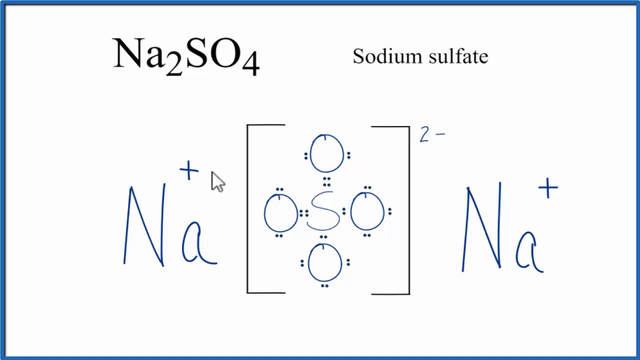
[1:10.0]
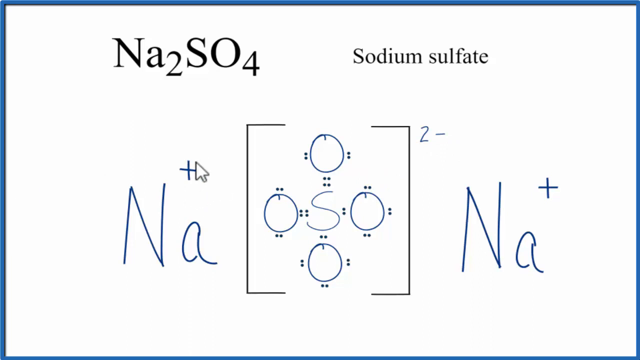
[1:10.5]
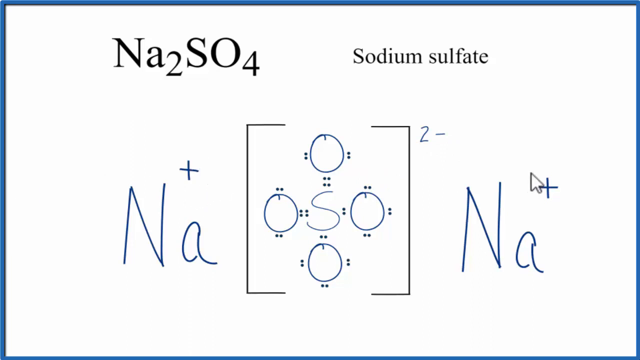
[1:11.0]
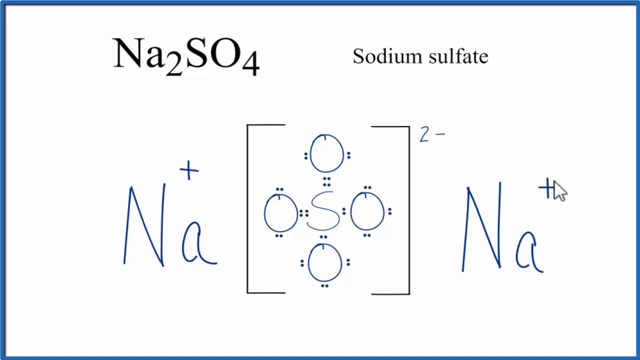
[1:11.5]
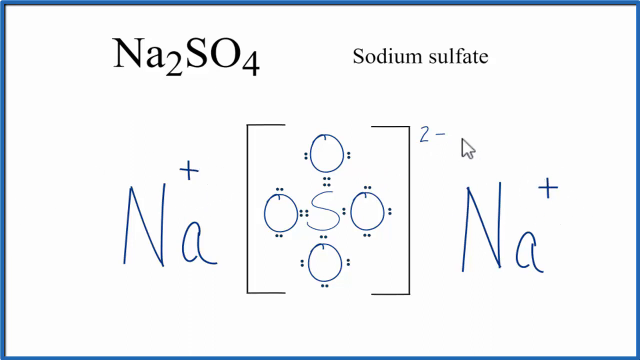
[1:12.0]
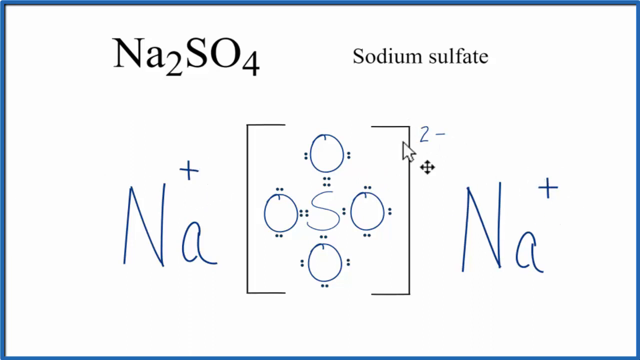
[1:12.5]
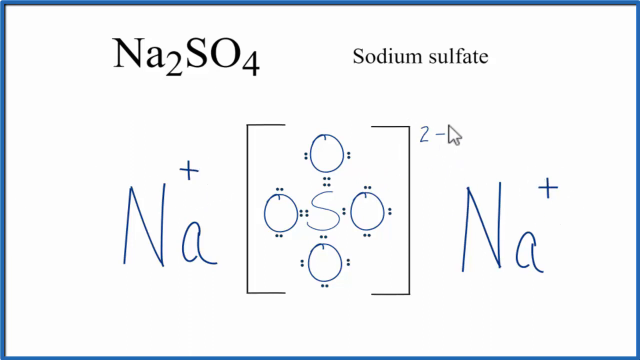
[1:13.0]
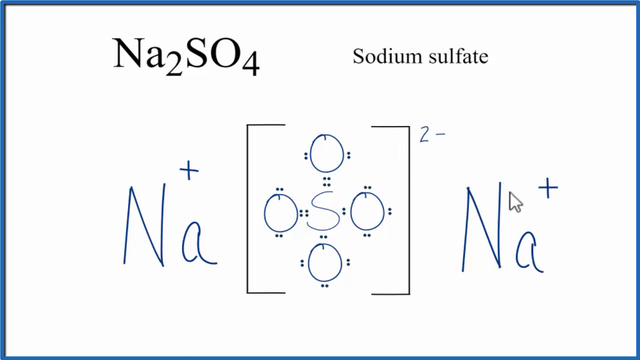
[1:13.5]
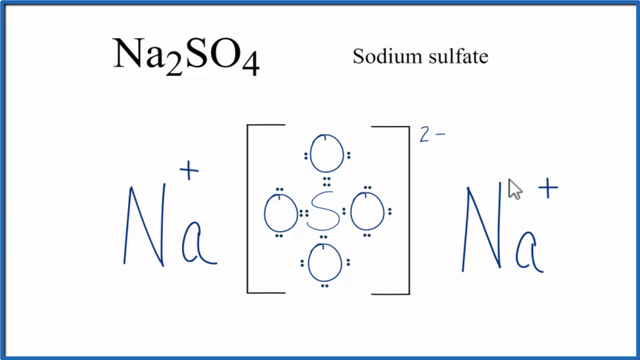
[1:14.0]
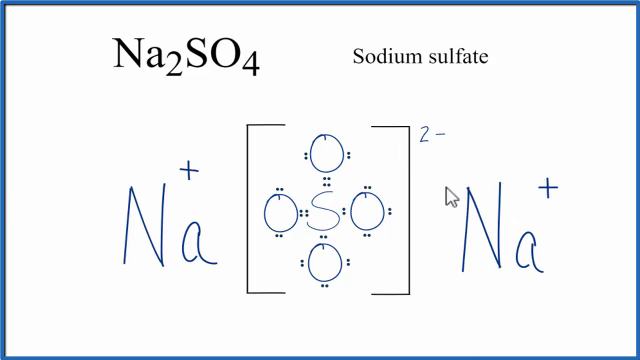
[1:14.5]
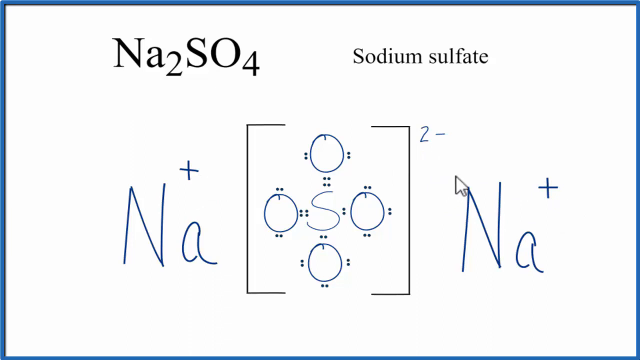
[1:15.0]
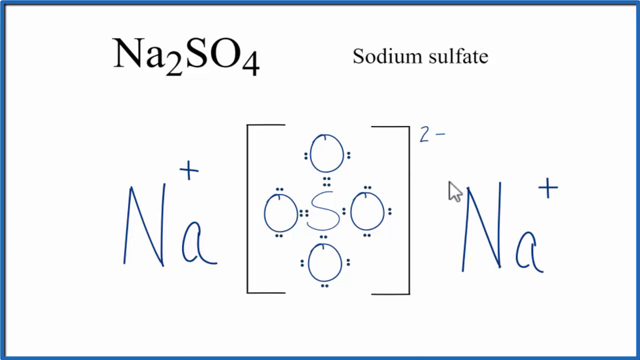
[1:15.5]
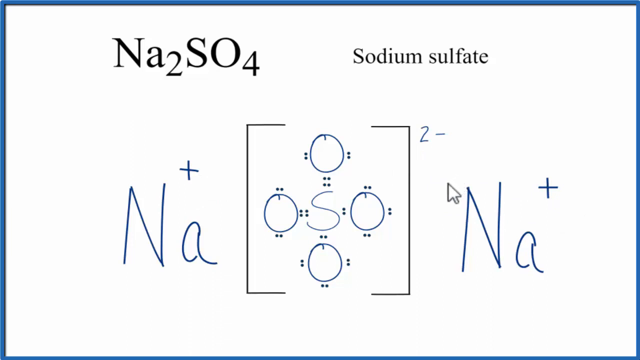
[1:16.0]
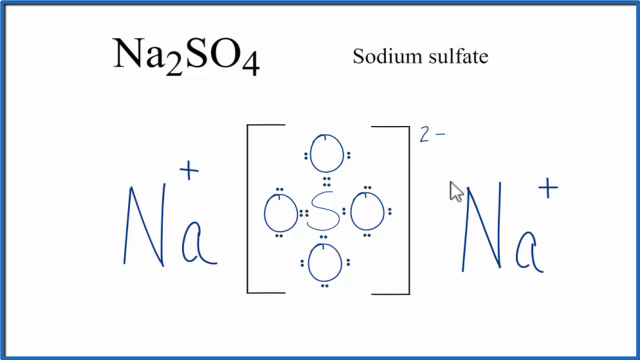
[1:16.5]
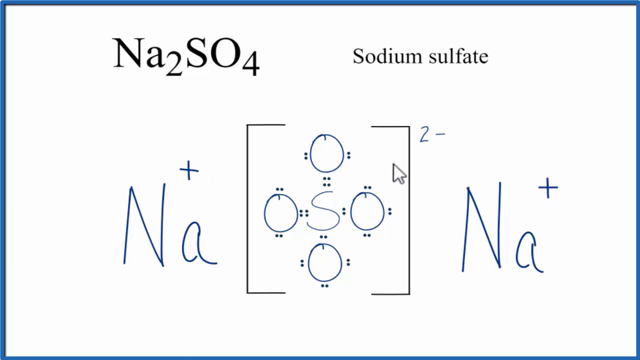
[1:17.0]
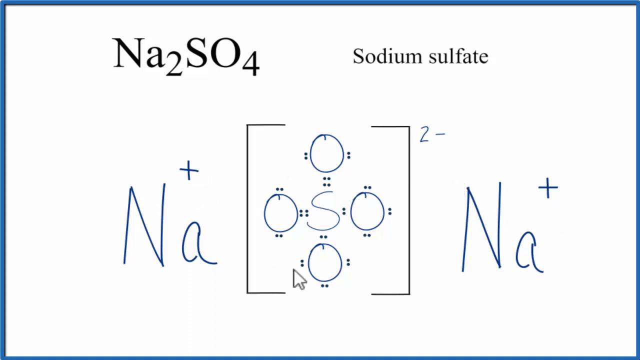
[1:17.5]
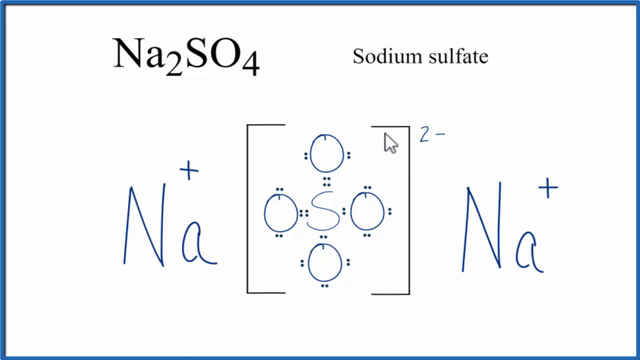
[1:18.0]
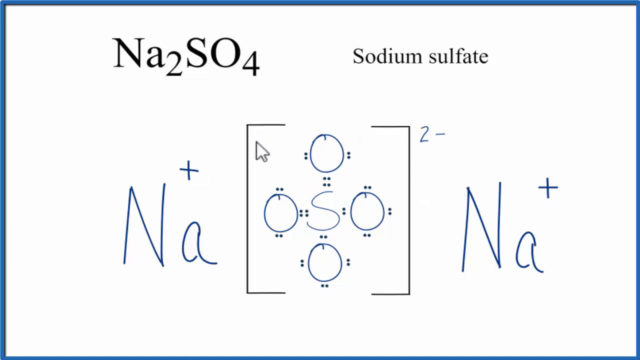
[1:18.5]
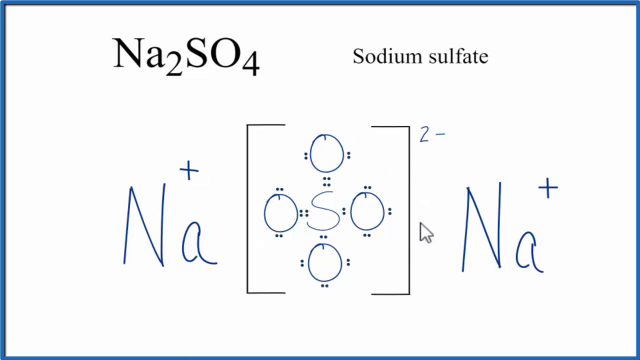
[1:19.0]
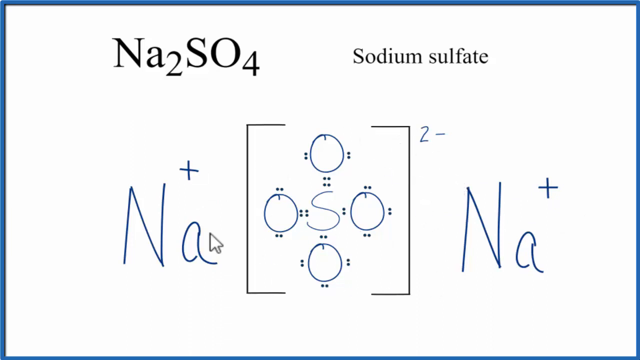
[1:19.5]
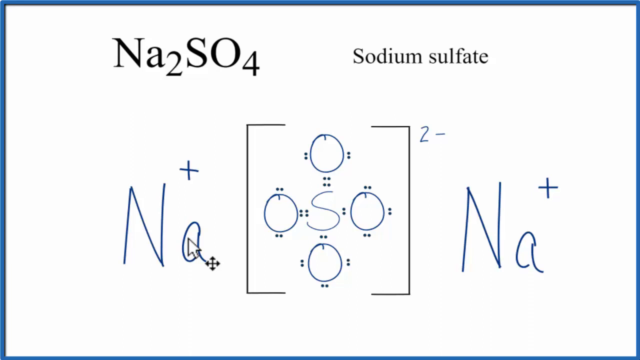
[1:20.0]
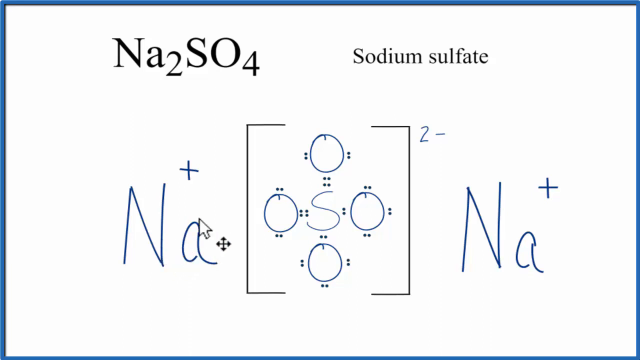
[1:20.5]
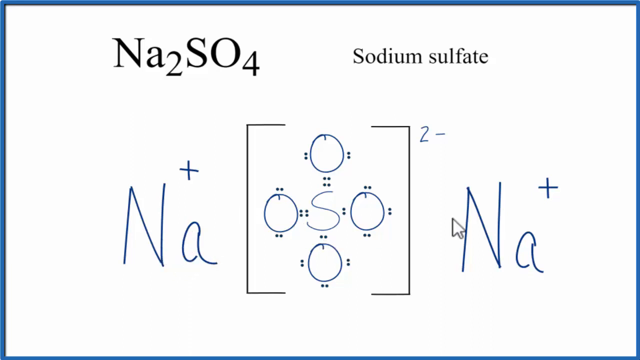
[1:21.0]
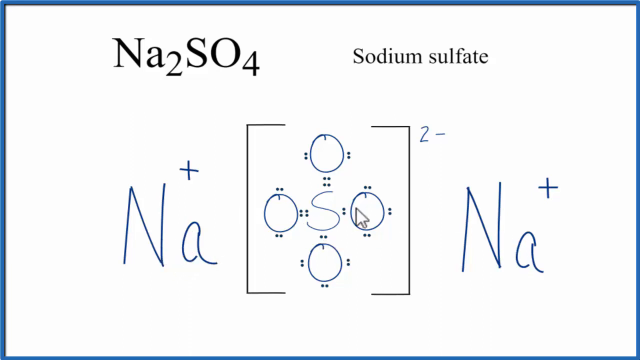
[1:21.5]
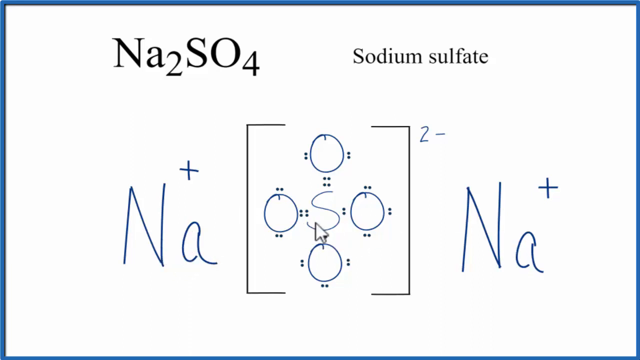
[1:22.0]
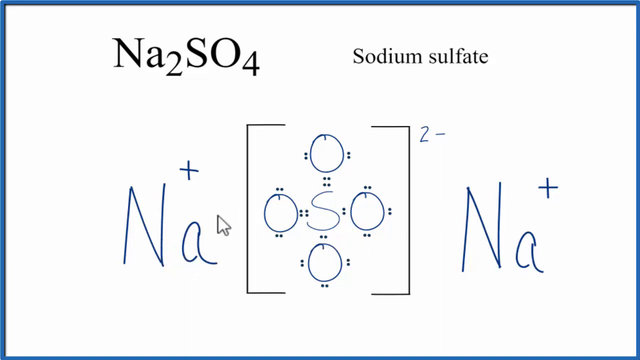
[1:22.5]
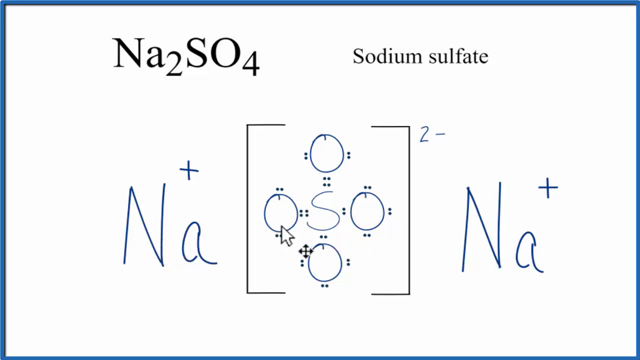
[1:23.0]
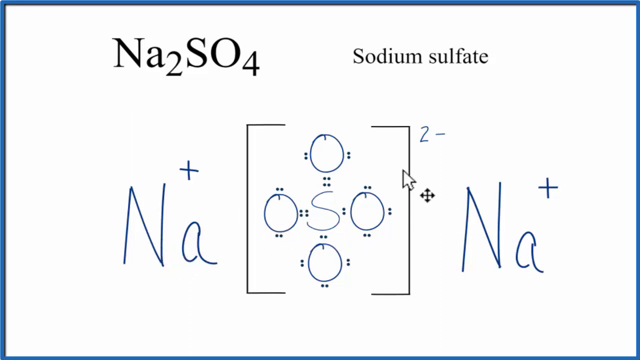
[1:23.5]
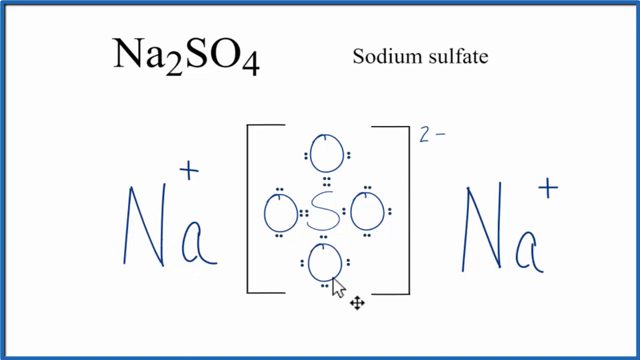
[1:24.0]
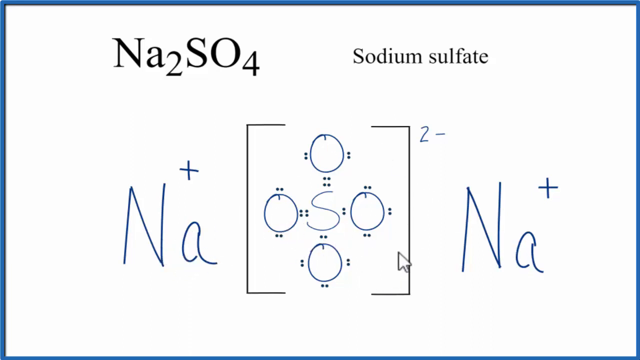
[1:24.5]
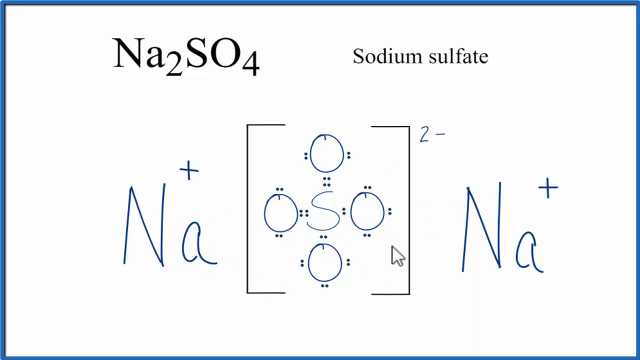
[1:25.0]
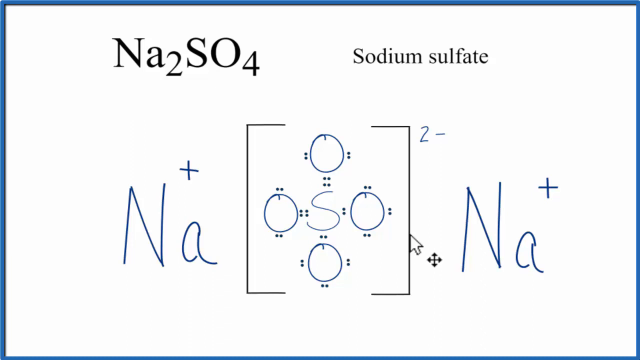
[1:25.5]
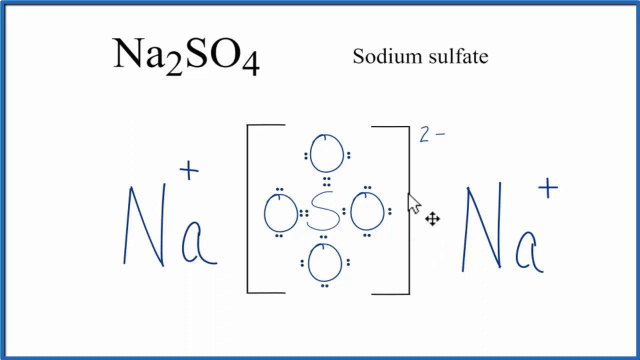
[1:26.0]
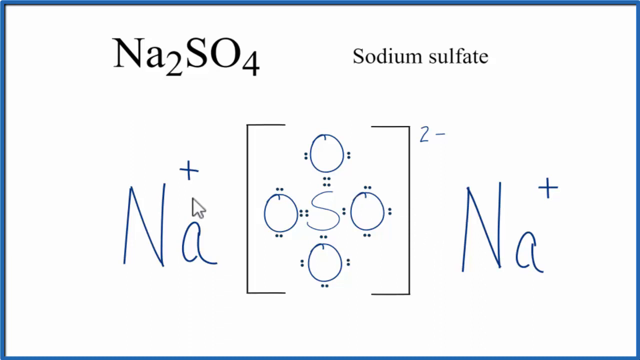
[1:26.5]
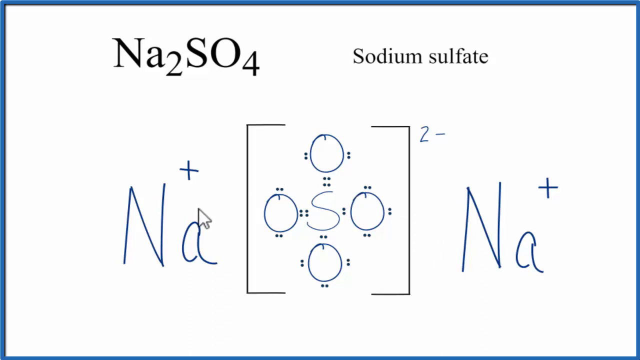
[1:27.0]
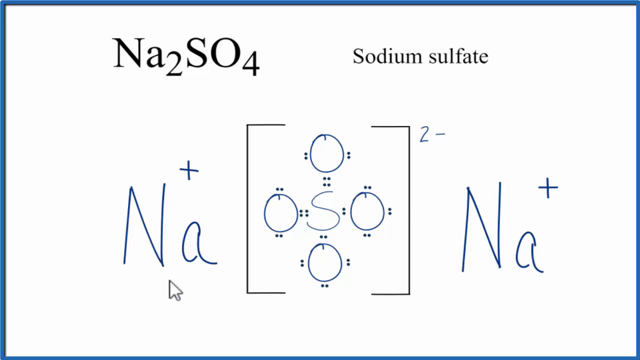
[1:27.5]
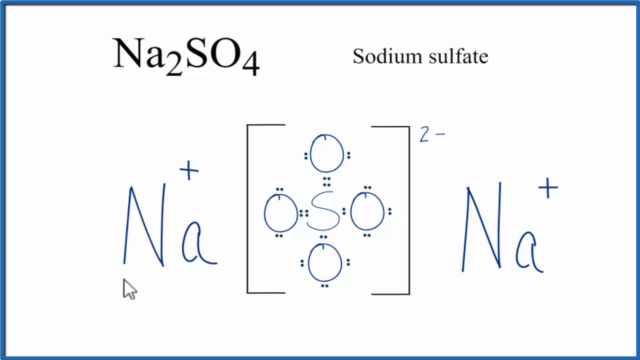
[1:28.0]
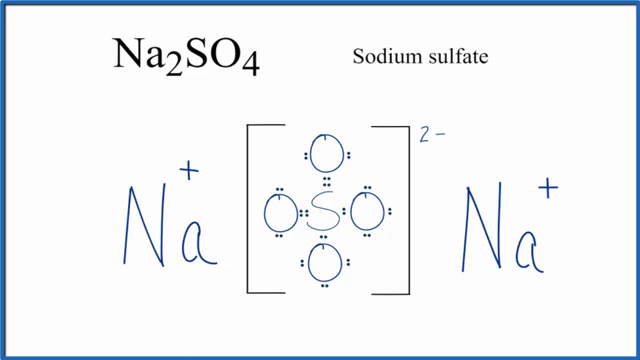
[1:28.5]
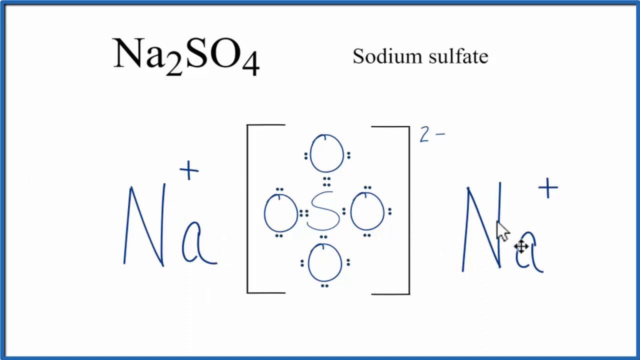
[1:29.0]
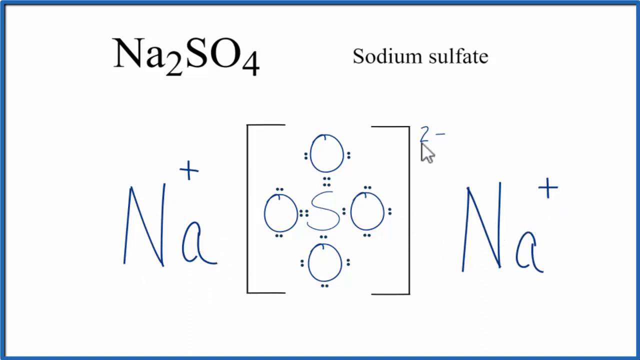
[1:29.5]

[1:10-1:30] The presenter circles the compound, apparently indicating how the ions' charges cancel out. The cross-shaped cursor is replaced by an ordinary mouse pointer, seemingly because the draw tool was deselected in favor of the regular cursor tool on the electronic whiteboard.